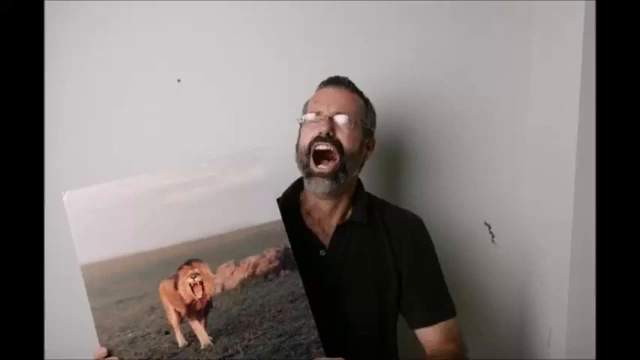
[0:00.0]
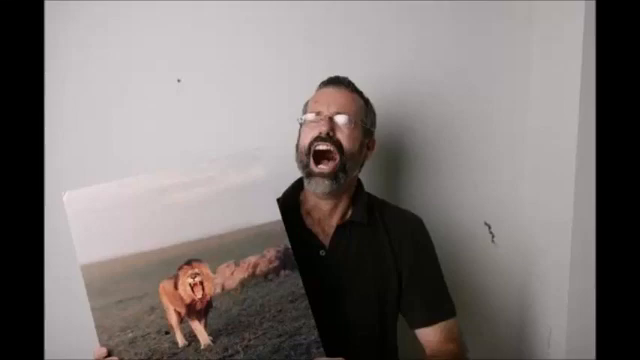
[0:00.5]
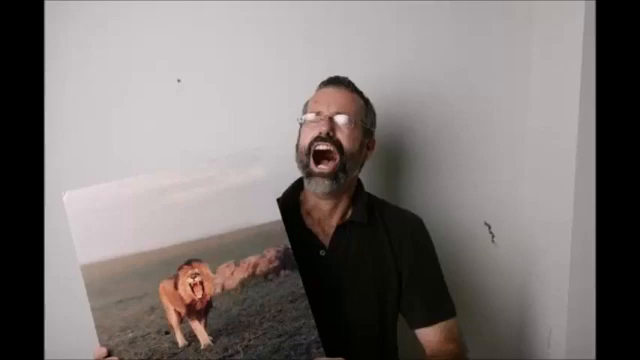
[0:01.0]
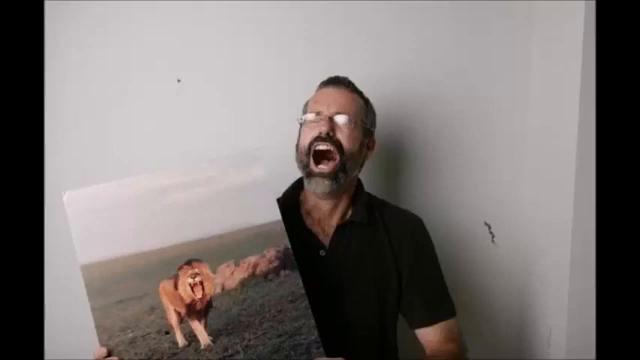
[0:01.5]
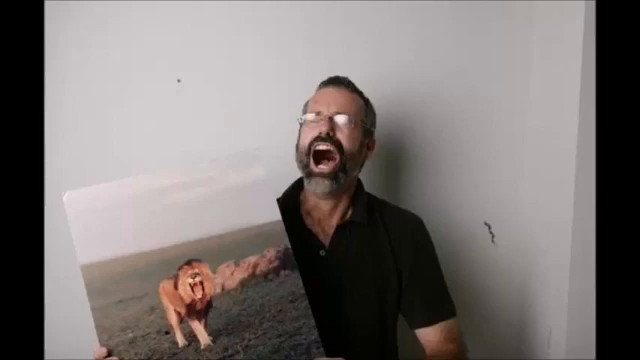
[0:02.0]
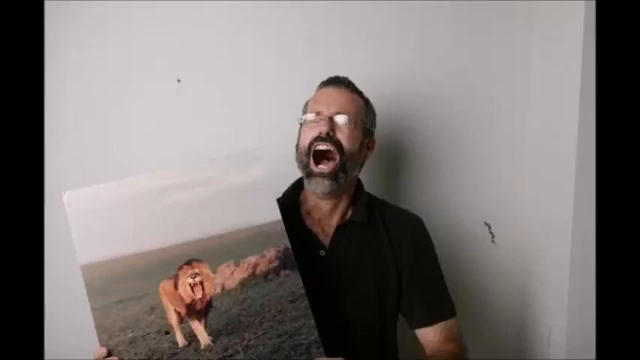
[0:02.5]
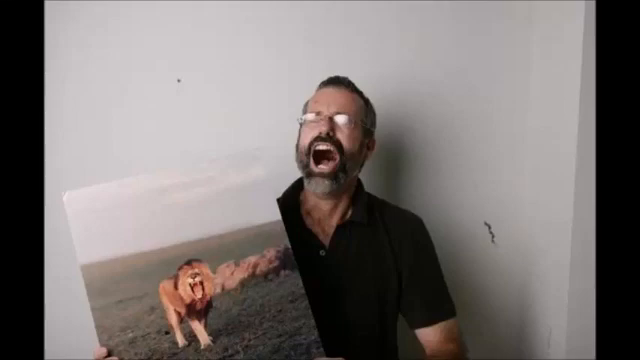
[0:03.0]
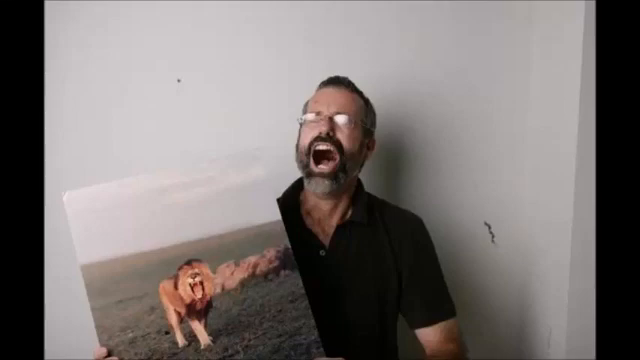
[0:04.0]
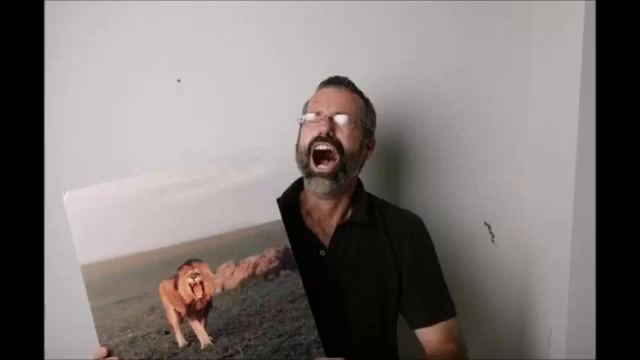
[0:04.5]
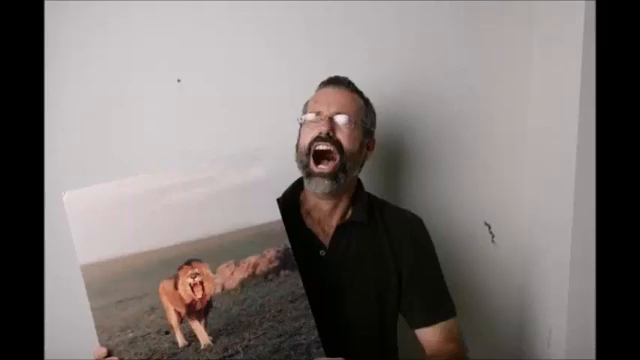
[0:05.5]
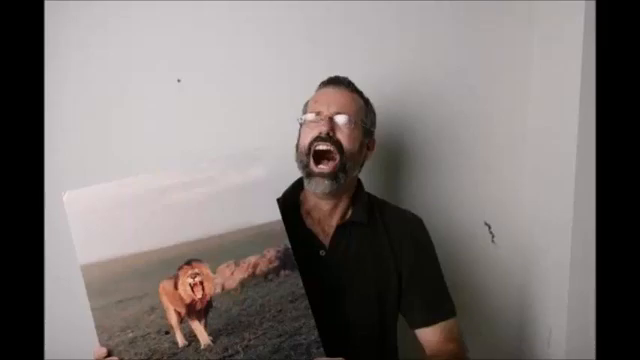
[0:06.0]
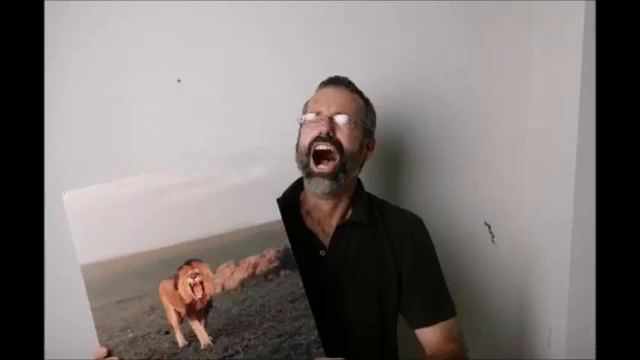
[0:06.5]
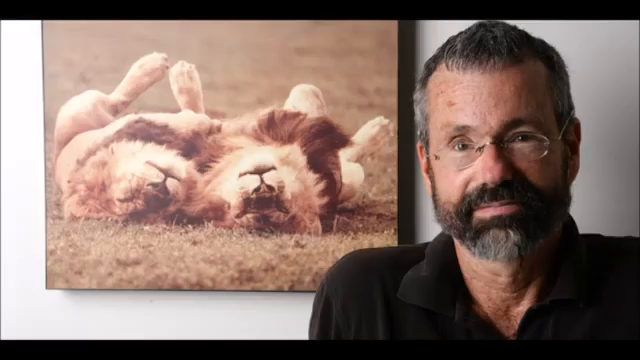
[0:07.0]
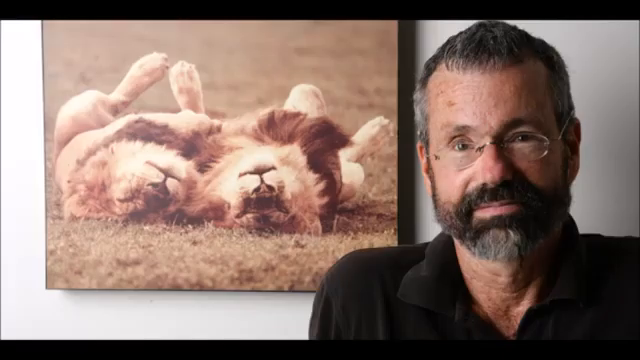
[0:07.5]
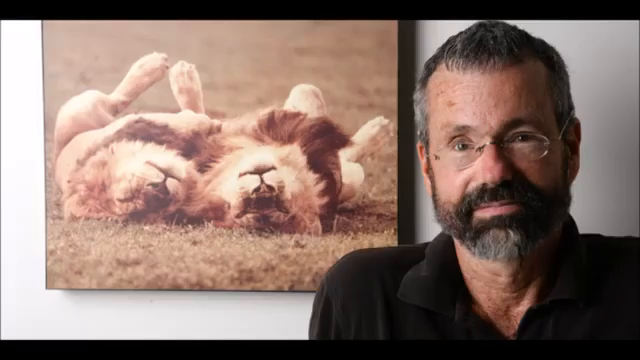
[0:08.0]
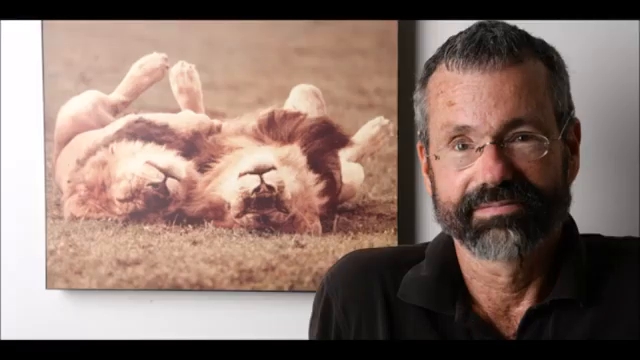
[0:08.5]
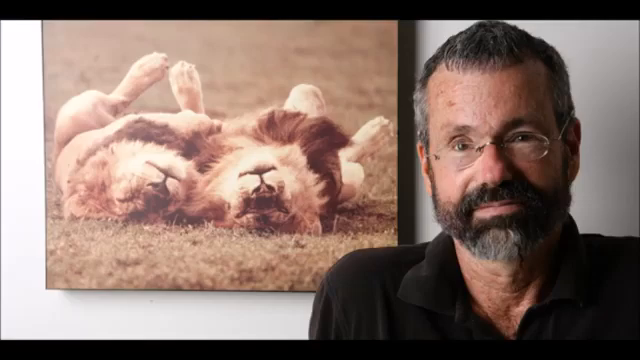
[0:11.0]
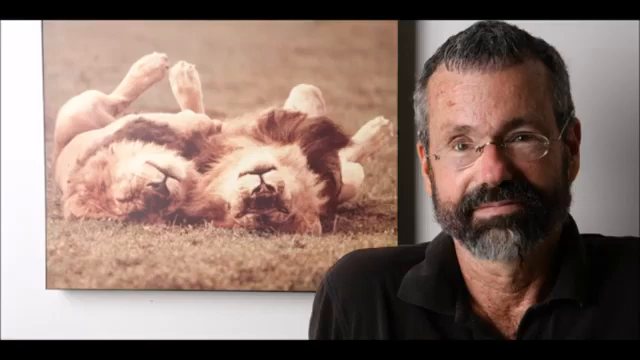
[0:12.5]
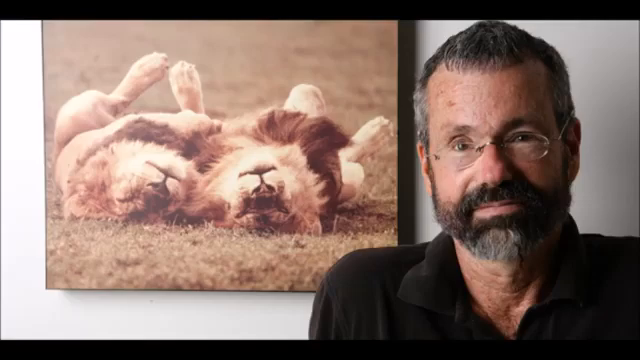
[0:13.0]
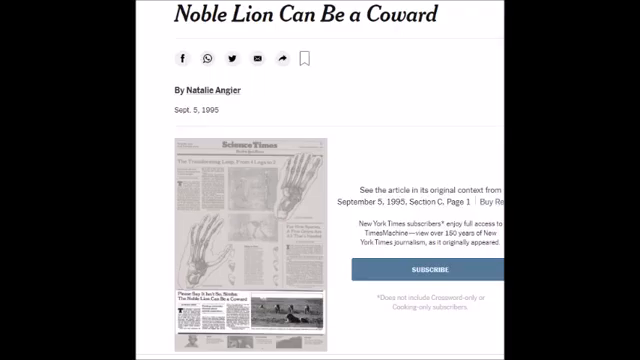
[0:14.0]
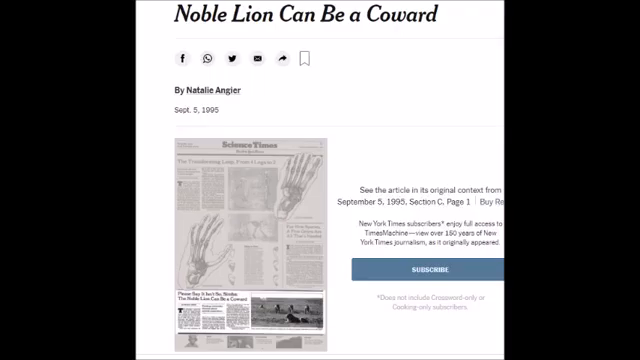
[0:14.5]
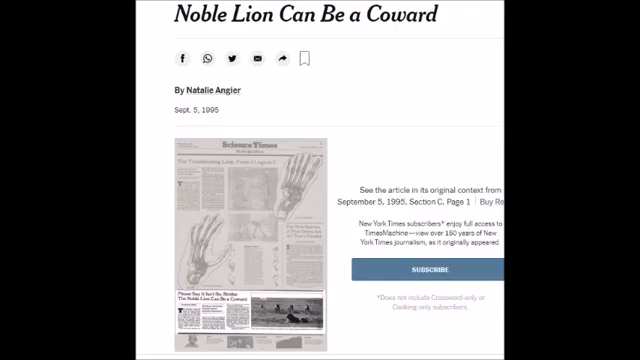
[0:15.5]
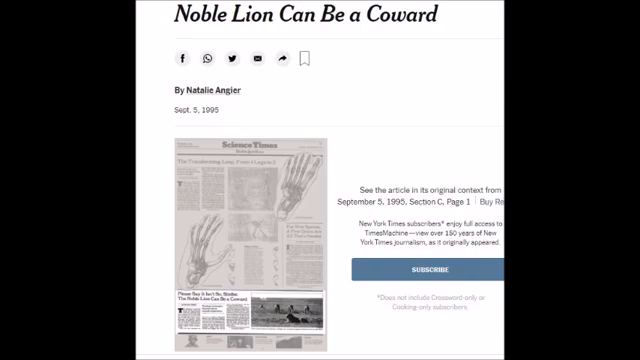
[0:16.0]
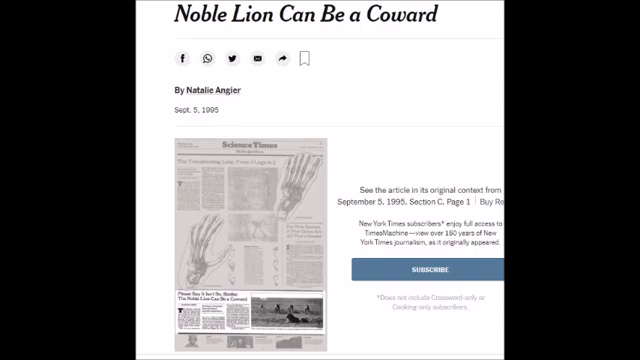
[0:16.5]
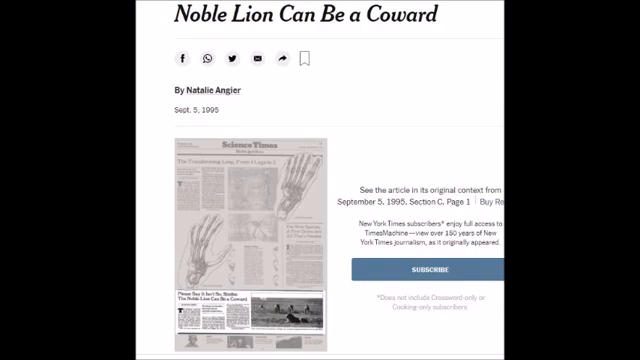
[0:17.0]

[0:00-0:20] A middle-aged man with glasses, a beard and a black t-shirt stands in the corner of a room with a white wall, holding a photograph of a lion with its mouth wide open. He almost mimics the lion's pose, his own mouth wide open, as he looks up toward wherever the camera is filming him. This is a still image. A second still follows, showing the same man, still with his glasses, beard and black t-shirt, holding another photograph, this time of two lions lying upside down on a field of grass, a bit like maybe a cat would lie. The lions look very placid, with neutral, completely level expressions, and the man's expression is also completely level. A third slide then appears, reading "Noble lion can be a coward," by Natalie Angler, originally written on September 5th 1995, along with a newspaper article apparently from the Science Times.